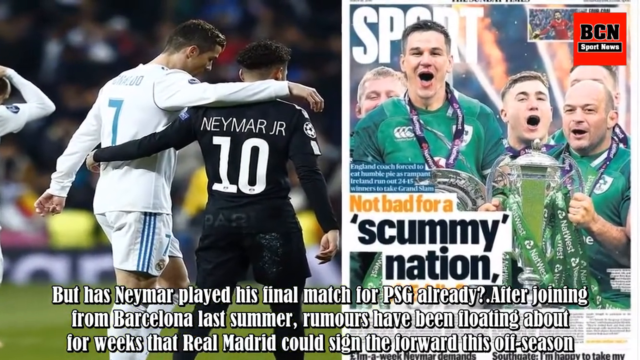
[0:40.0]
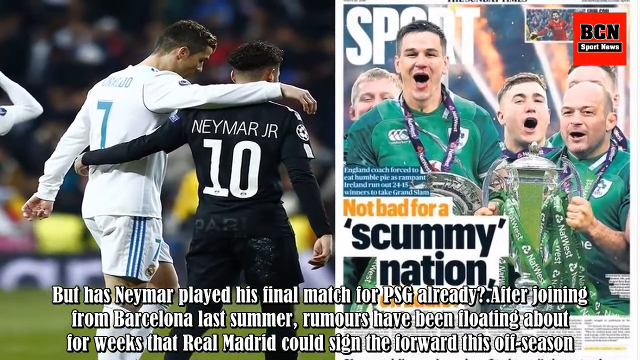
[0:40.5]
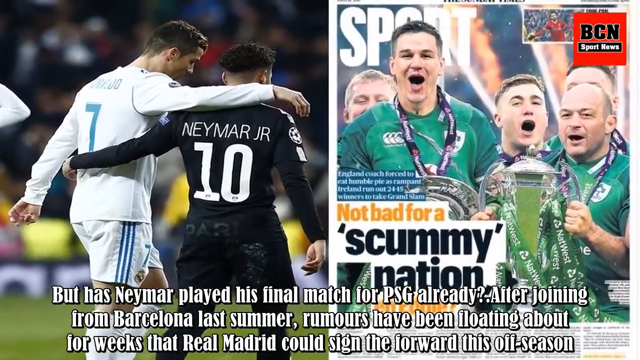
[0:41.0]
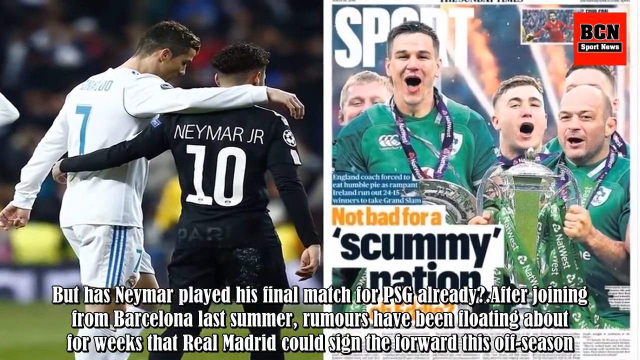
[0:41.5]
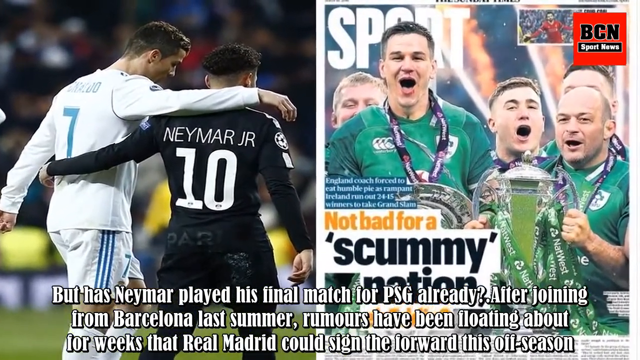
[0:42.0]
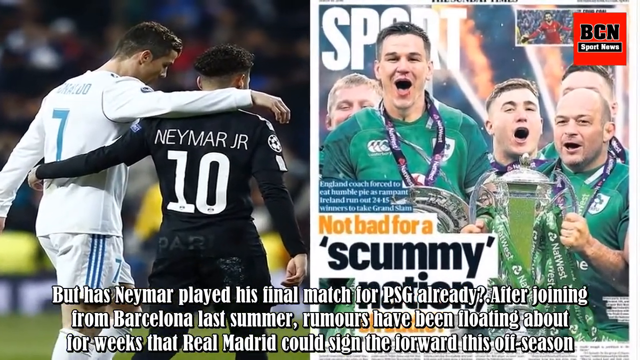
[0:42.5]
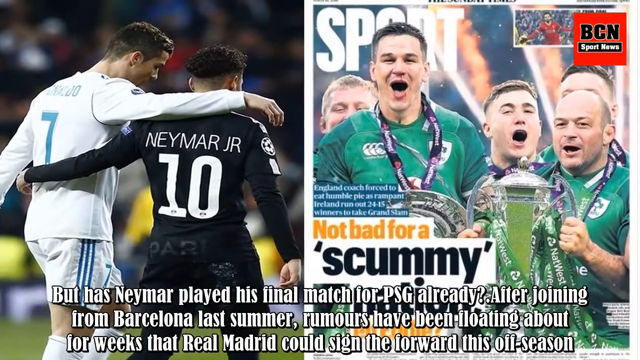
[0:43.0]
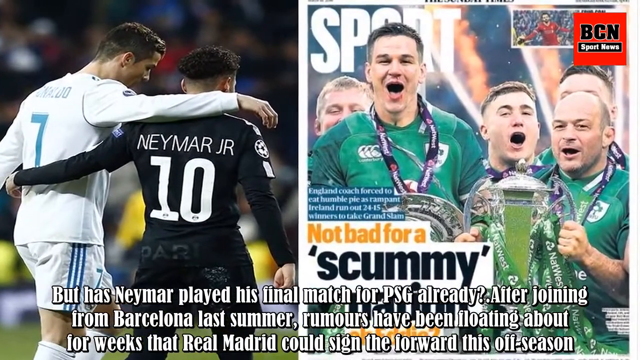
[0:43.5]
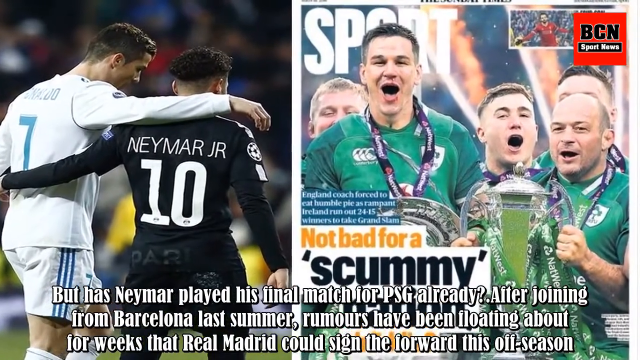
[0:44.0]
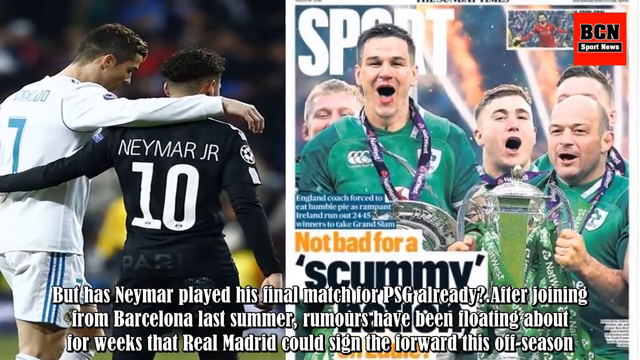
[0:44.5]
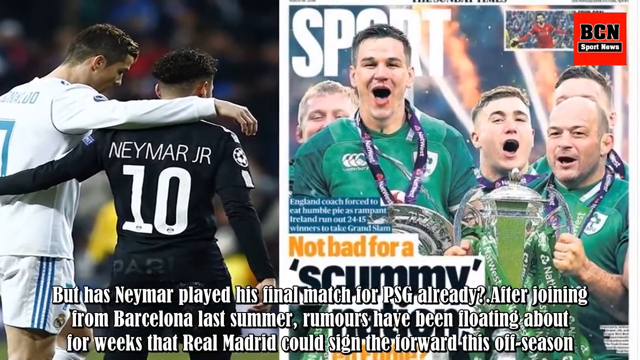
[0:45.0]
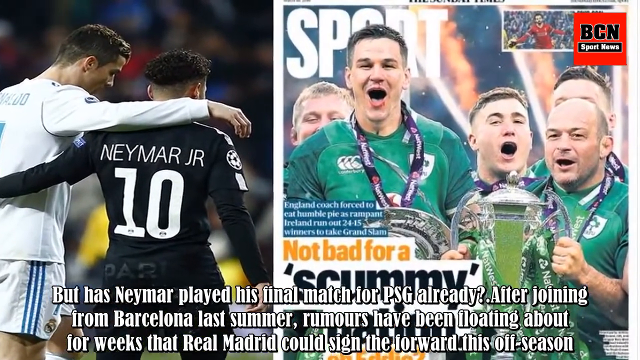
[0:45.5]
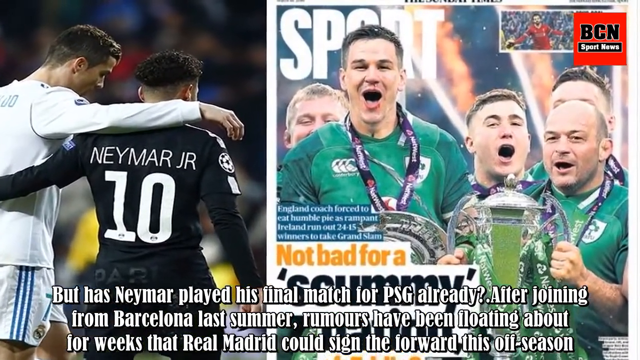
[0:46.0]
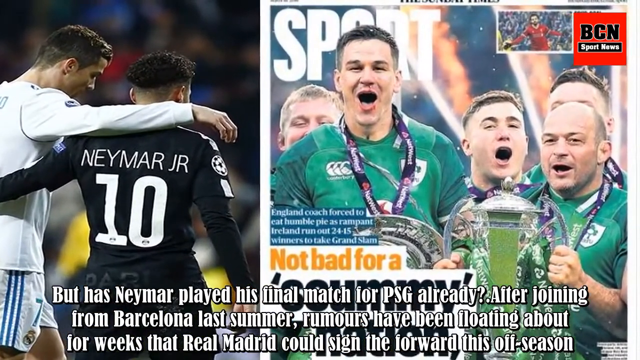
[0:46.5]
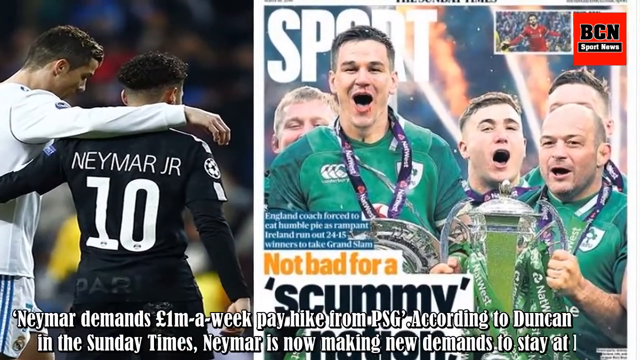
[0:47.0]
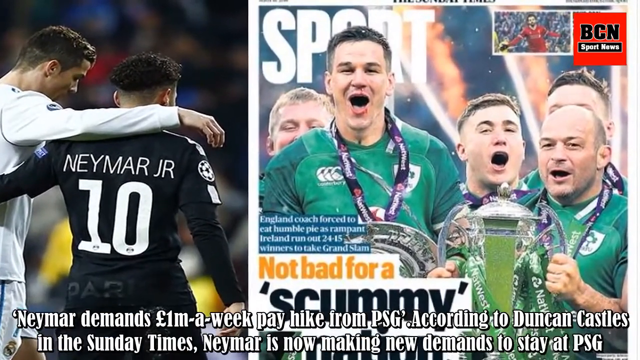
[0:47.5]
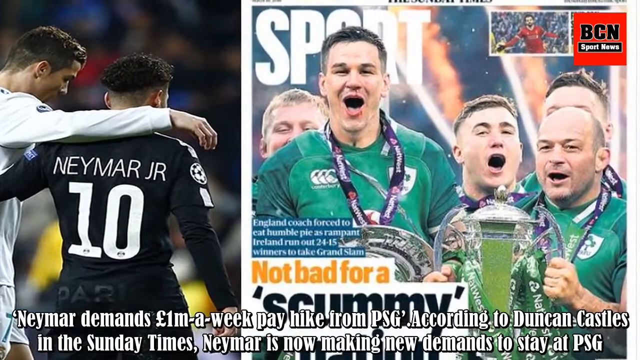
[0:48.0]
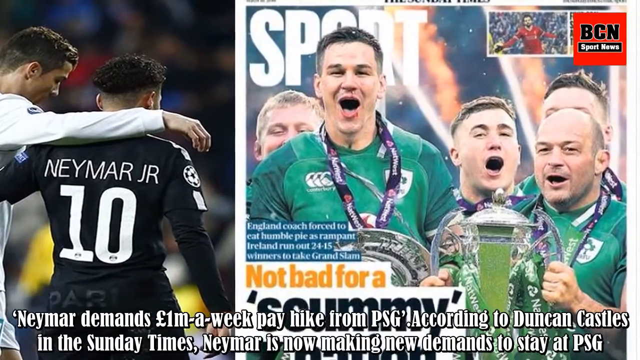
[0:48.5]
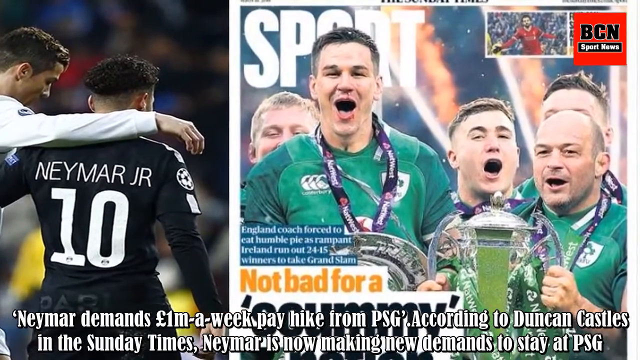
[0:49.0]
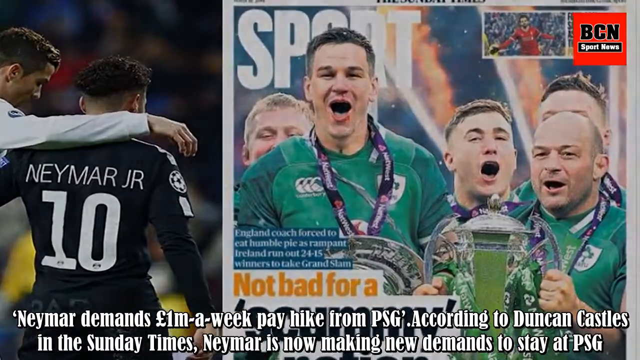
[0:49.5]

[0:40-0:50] White text at the bottom reads: "but has Neymar played his final match for PSG already? After joining from Barcelona last summer, rumors have been floating around for weeks". A split screen shows Neymar and Ronaldo with their arms around each other. Neymar is in black, with white text that says "Neymar Junior", and Ronaldo wears a white and blue jersey with his number seven. The screen then briefly shows the Ireland team in green winning the cup, with the newspaper headline "not bad for a scum nation". Next to this is "CN sport" inside a circle or square.